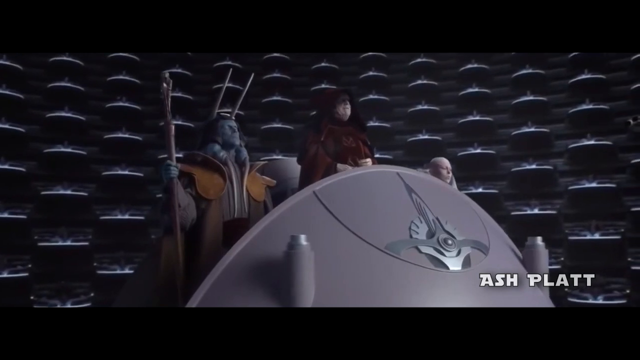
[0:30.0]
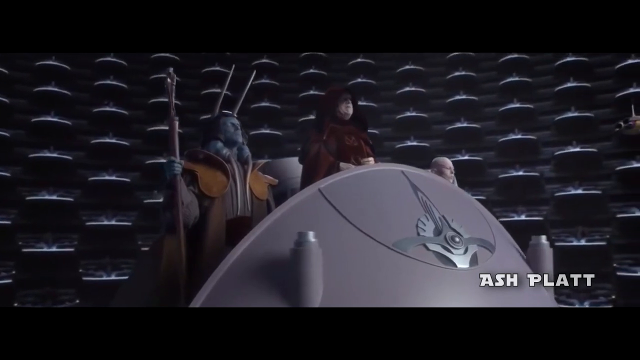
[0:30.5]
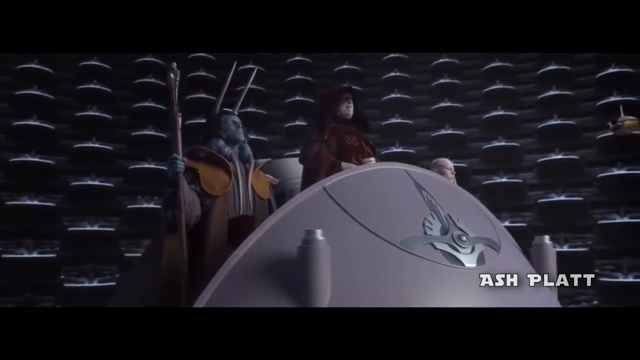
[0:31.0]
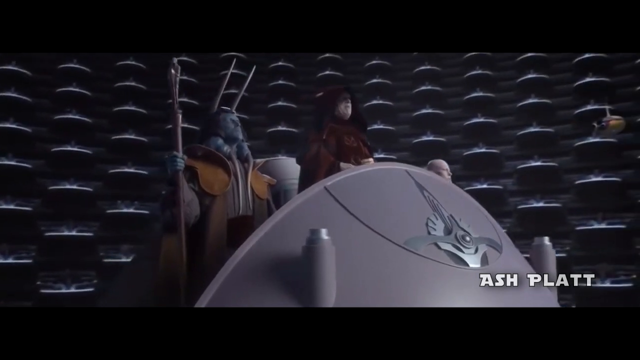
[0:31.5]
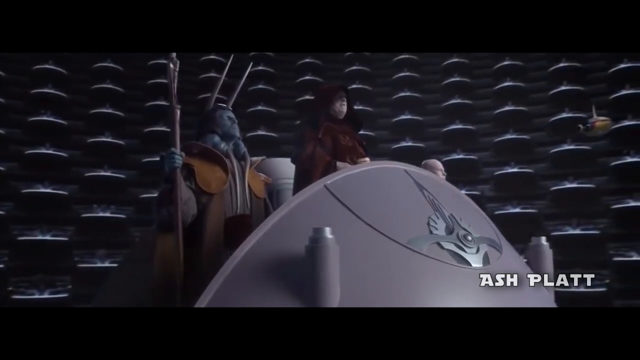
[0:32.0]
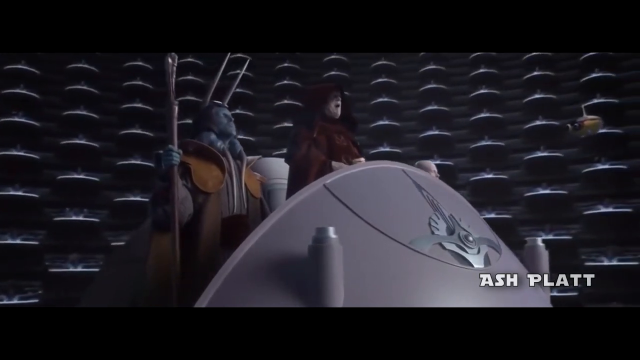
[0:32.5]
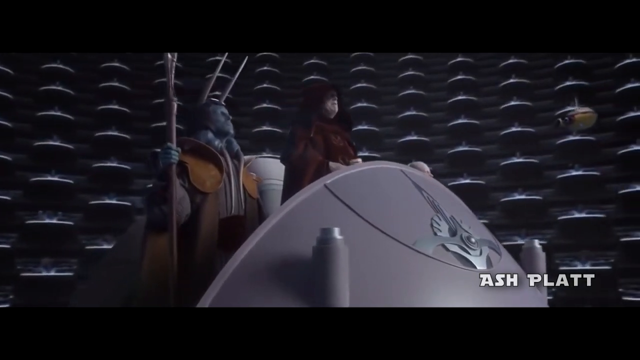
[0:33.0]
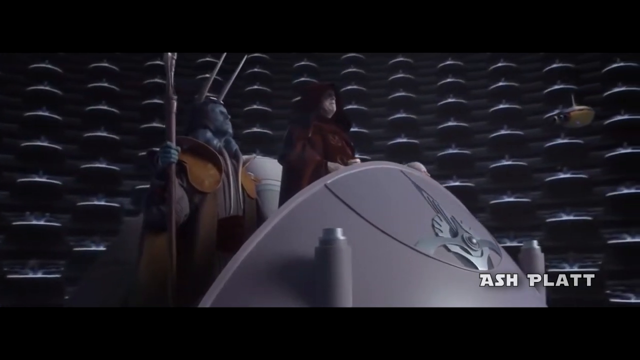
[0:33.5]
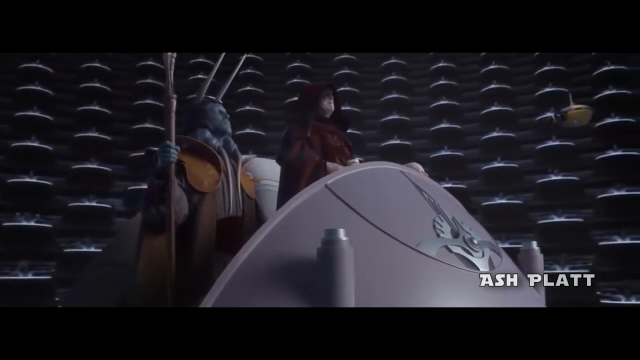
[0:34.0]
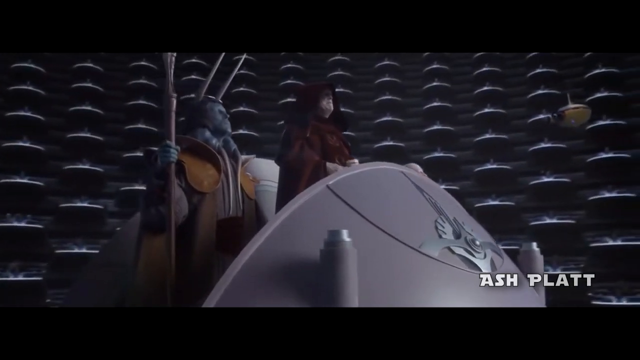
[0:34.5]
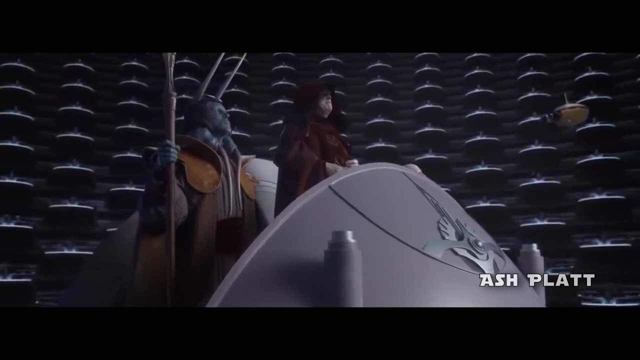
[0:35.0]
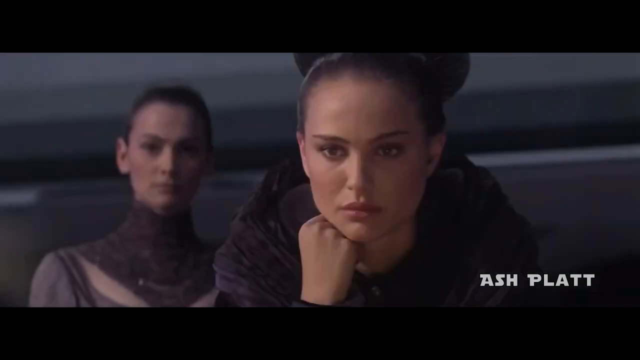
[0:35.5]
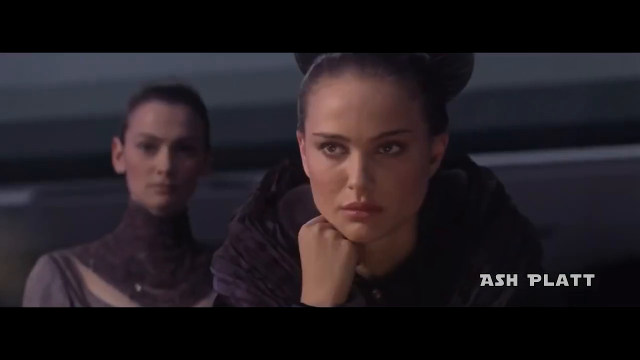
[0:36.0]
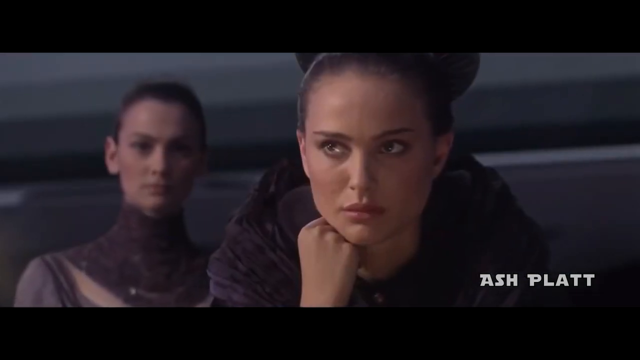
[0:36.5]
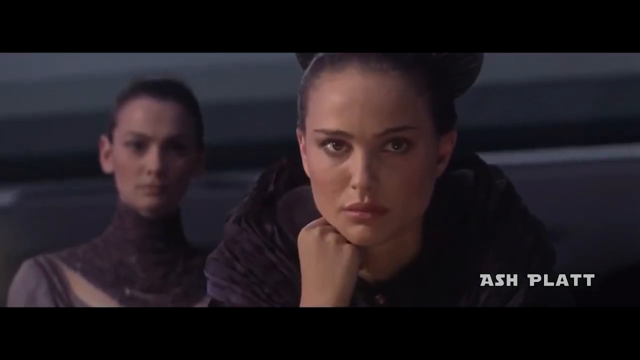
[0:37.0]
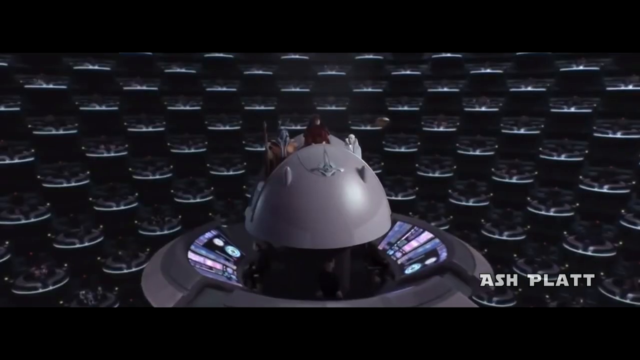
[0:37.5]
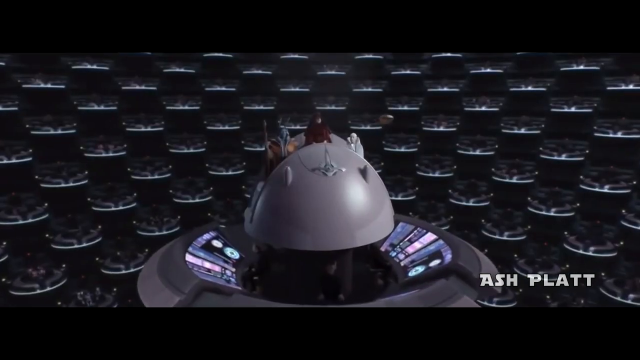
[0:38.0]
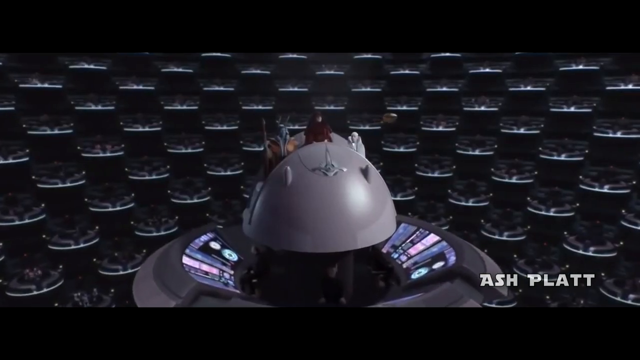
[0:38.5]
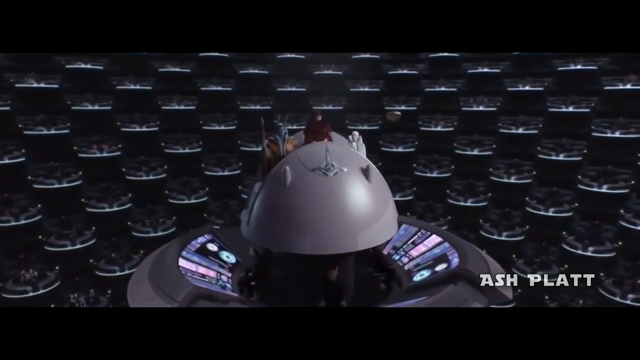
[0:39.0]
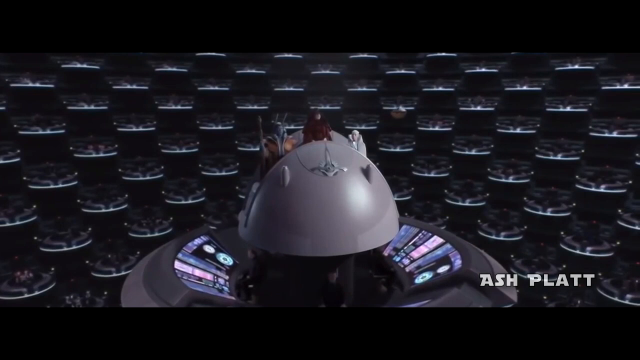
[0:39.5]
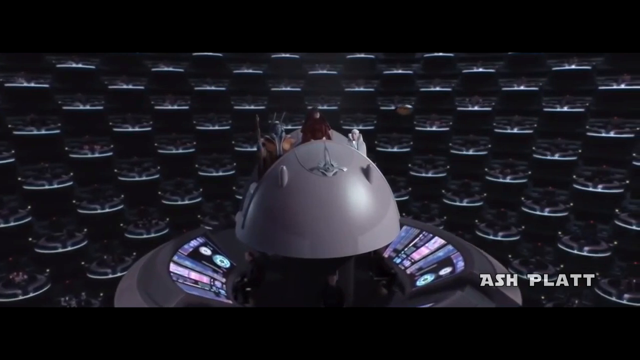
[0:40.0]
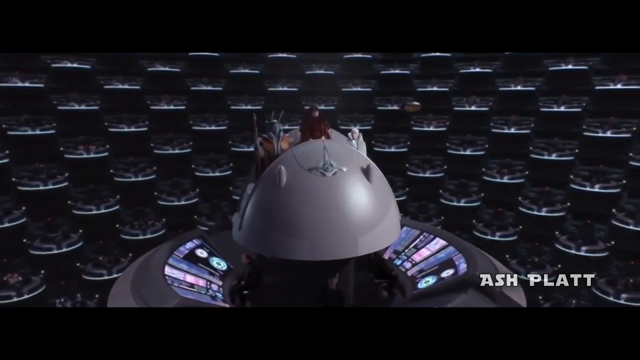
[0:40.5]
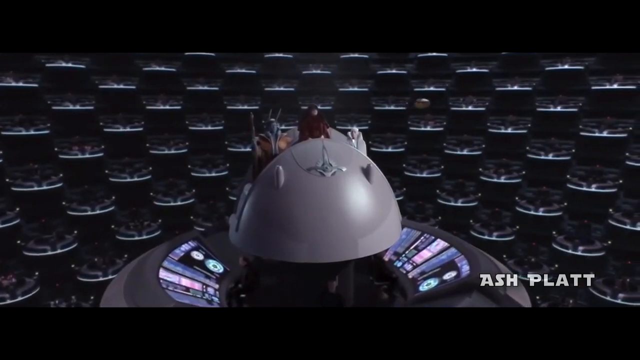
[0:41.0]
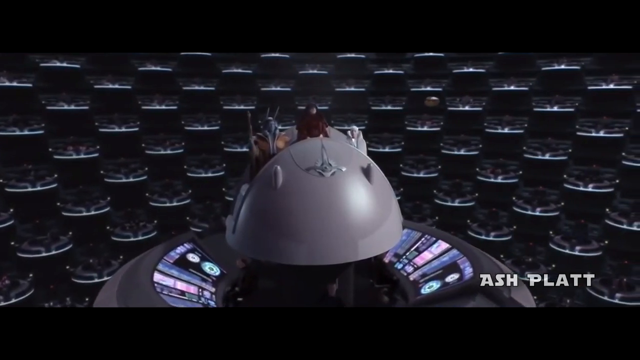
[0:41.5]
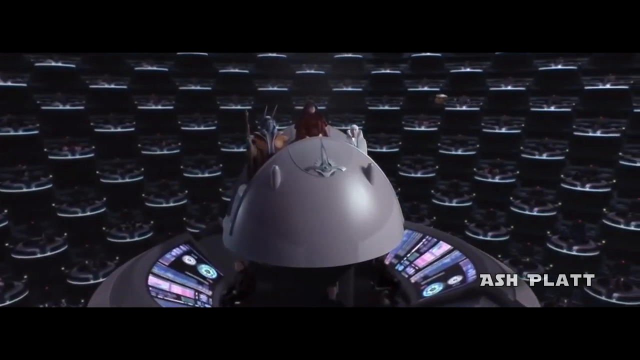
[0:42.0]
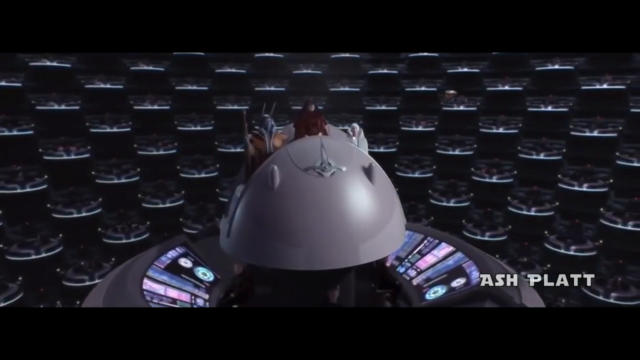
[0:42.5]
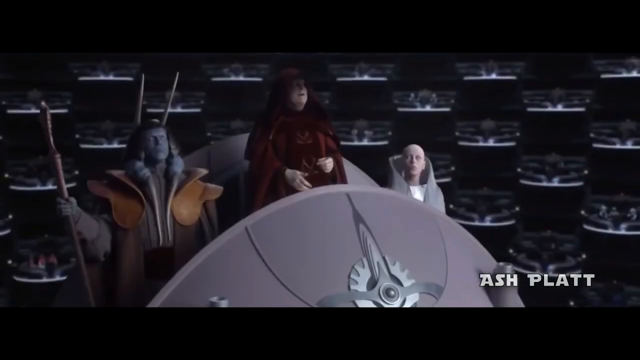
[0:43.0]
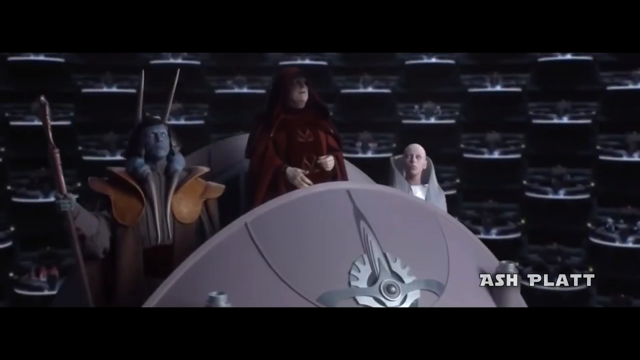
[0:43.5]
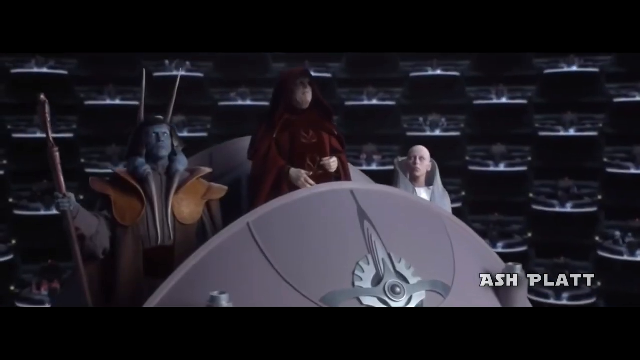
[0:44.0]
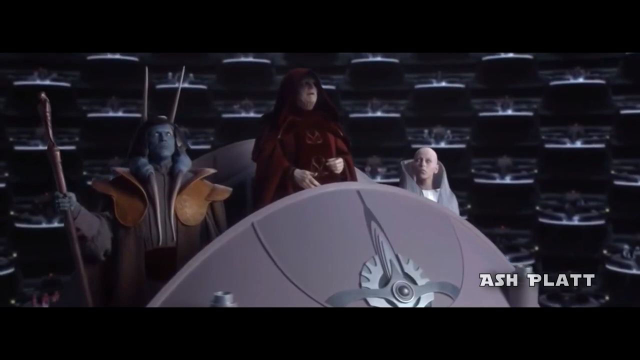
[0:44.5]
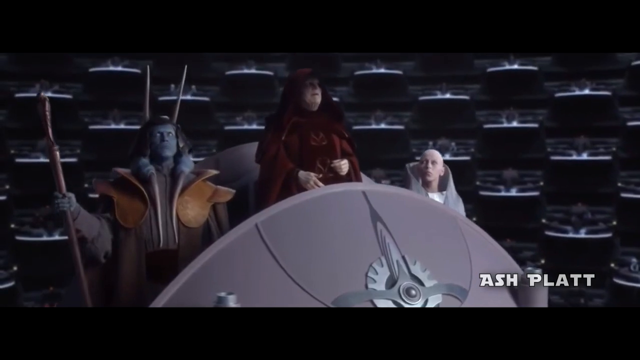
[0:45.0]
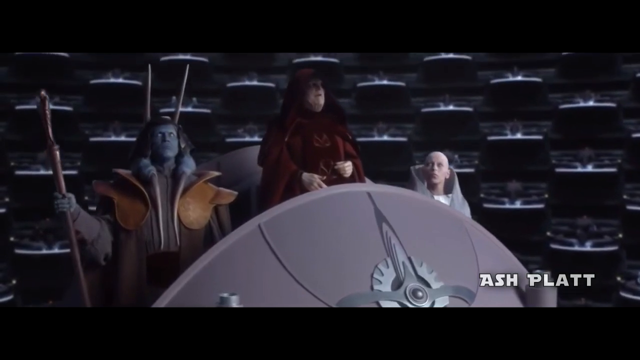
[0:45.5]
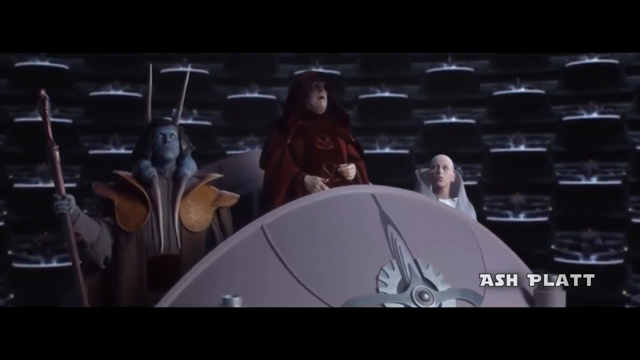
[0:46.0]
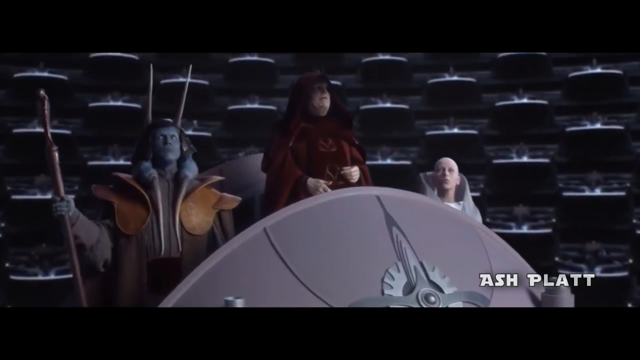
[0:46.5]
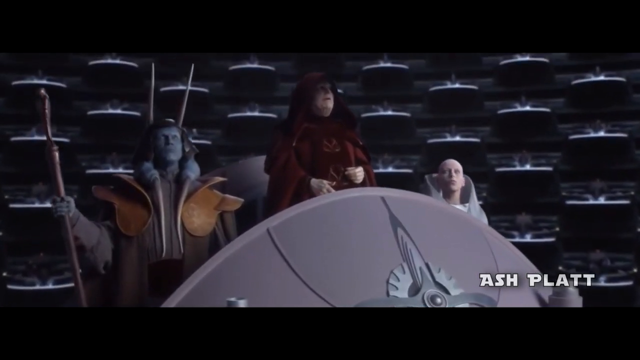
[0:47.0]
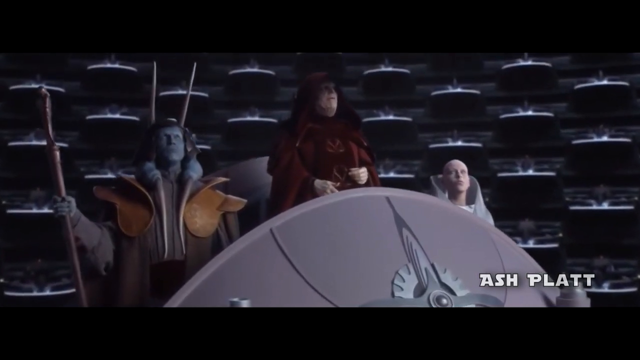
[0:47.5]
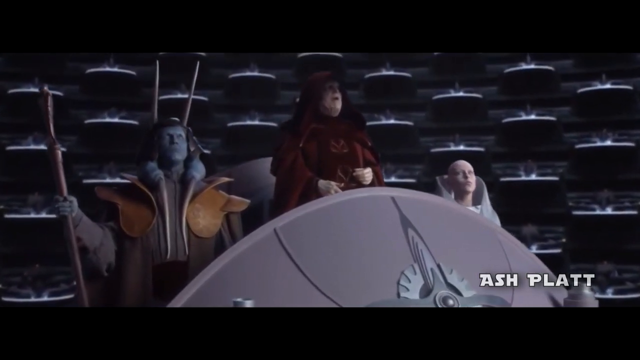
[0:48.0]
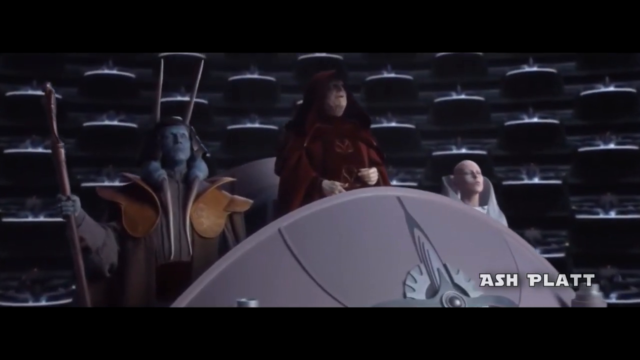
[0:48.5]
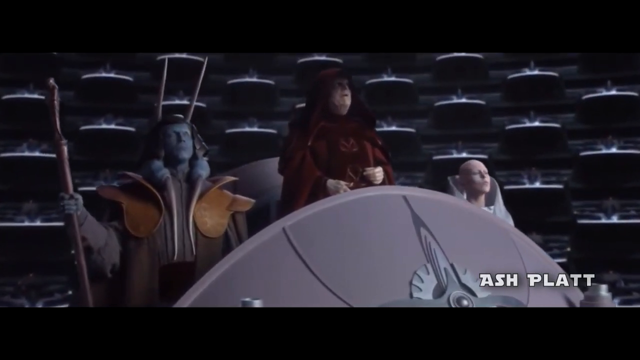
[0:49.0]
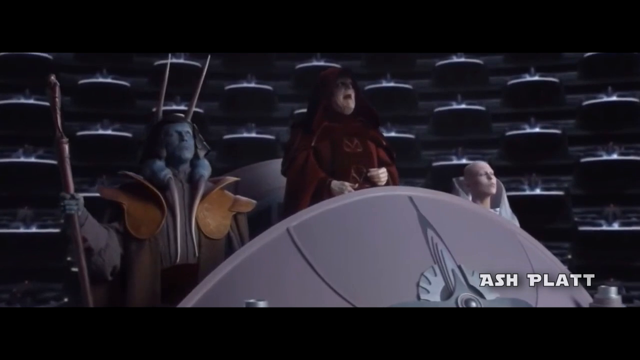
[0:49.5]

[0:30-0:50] The focus is on a structure in the middle of the room with three individuals inside. On the left is a grey man holding a staff and wearing a brown robe. In the center, and most prominent, is a pale man in a red robe. On the right is a relaxed figure who is pink and bald. Surrounding the structure is a series of pods with people spectating as the man speaks. The video pans left and rotates as the man speaks, revealing other spectators. It then transitions to a Caucasian woman with her right hand against her chin; behind her is another Caucasian woman who is slightly out of focus. The video transitions back to the central structure with the three figures, where the man in the red robe continues delivering his speech. The camera zooms in for a close-up of the man speaking. The other two figures at his side are stoic, standing statuesque without any movement.